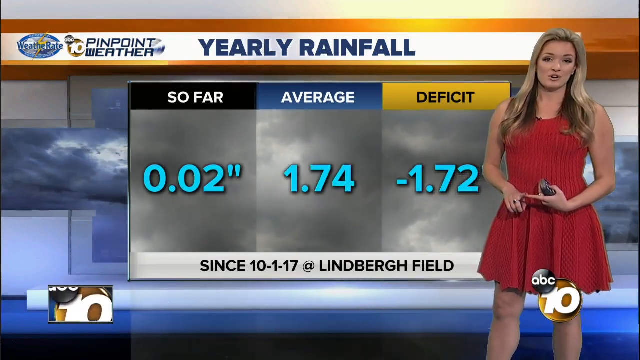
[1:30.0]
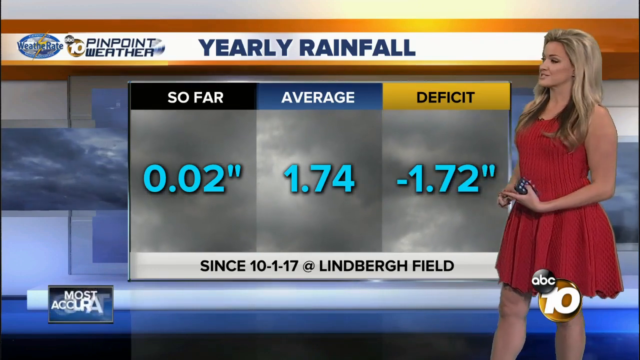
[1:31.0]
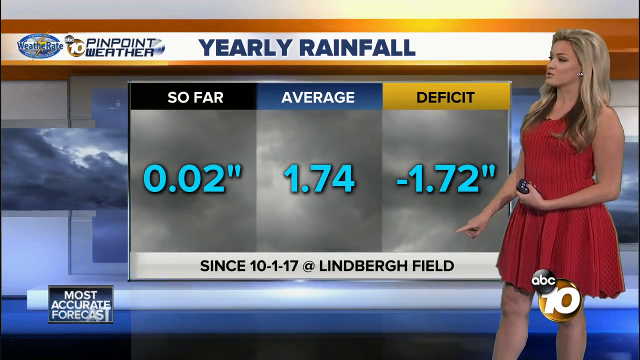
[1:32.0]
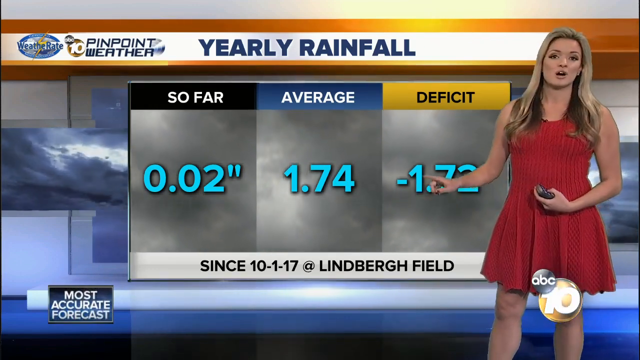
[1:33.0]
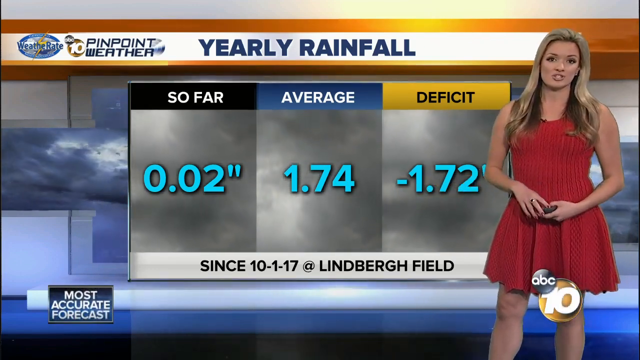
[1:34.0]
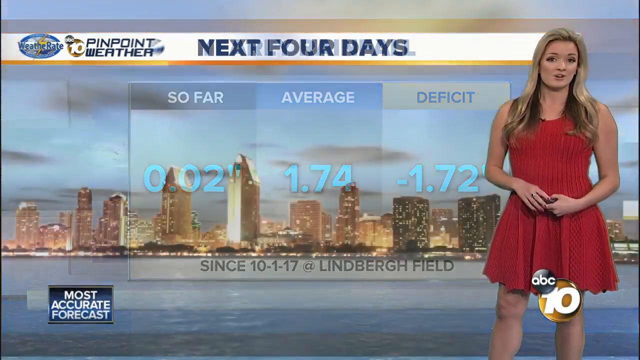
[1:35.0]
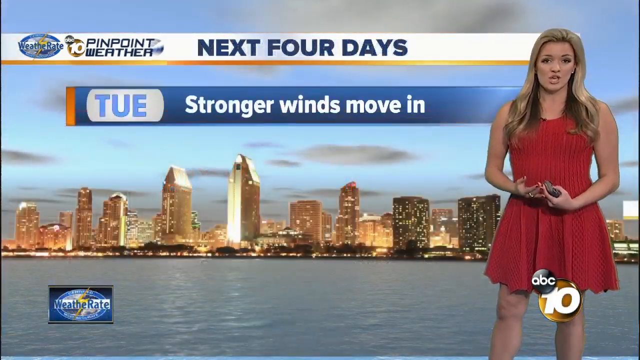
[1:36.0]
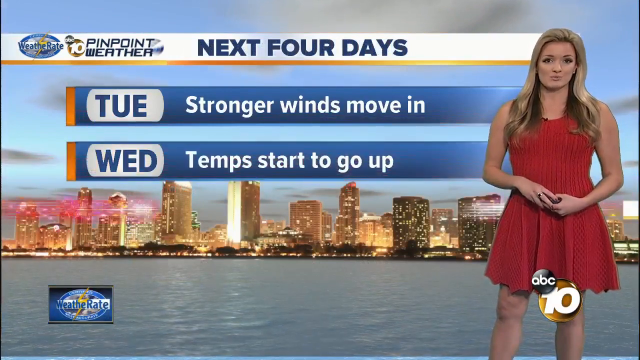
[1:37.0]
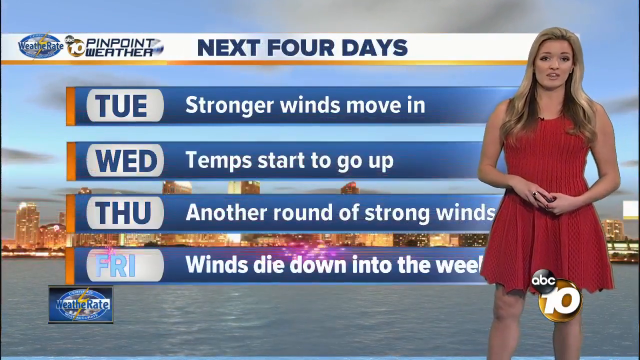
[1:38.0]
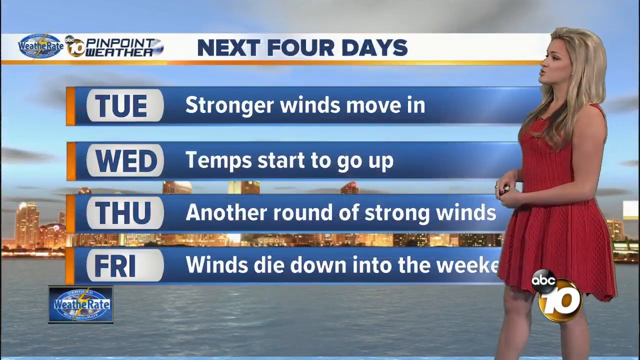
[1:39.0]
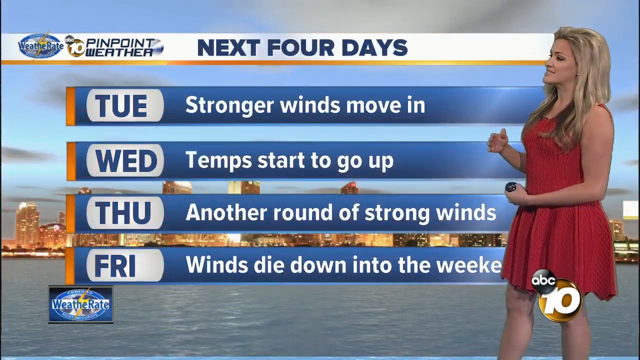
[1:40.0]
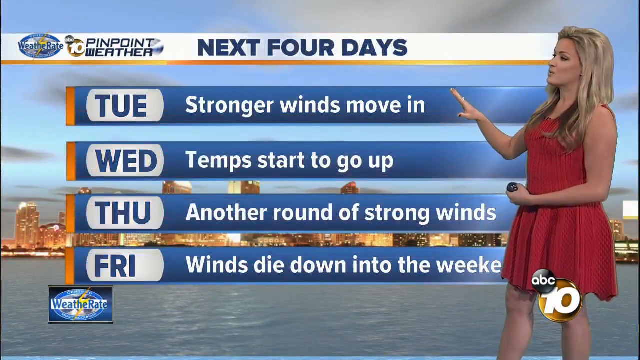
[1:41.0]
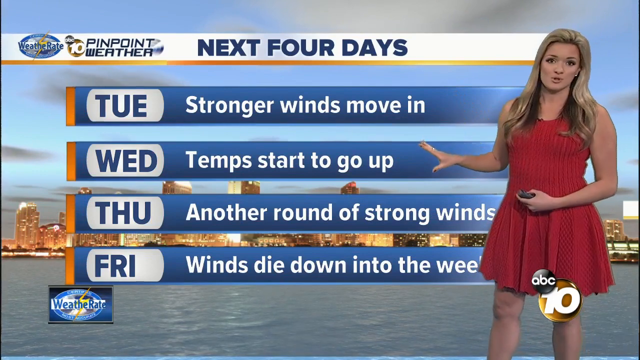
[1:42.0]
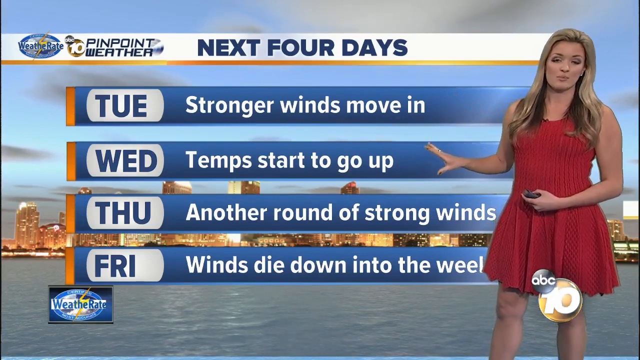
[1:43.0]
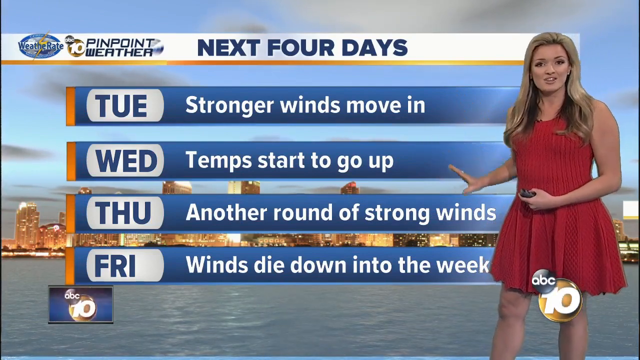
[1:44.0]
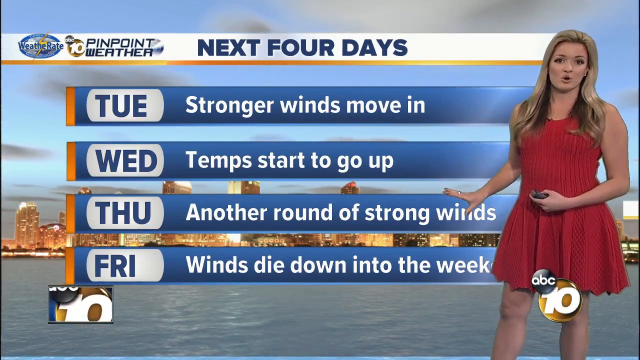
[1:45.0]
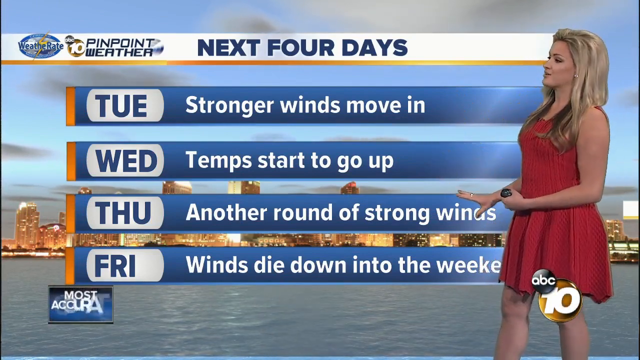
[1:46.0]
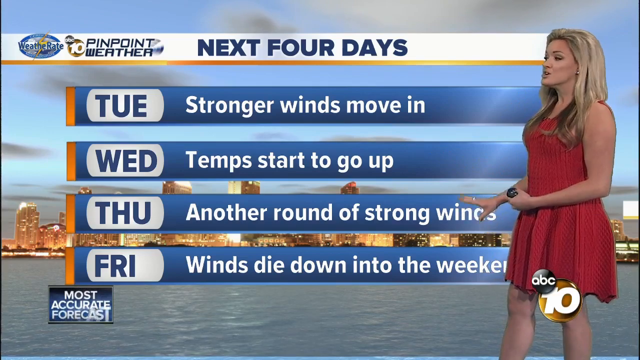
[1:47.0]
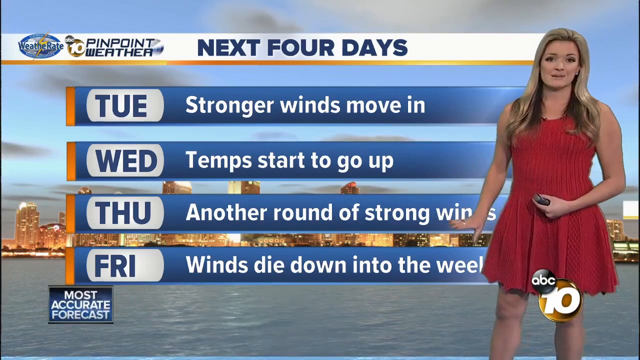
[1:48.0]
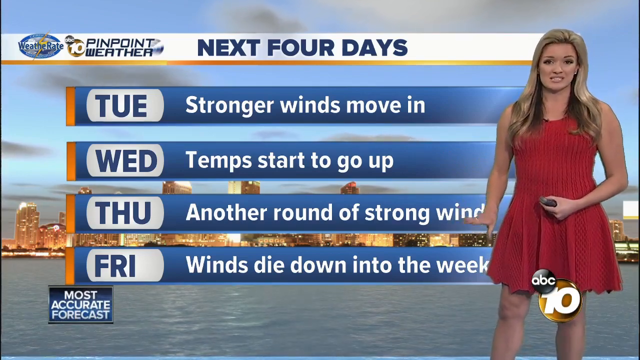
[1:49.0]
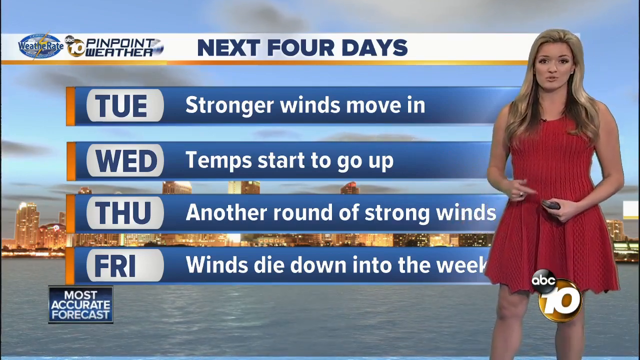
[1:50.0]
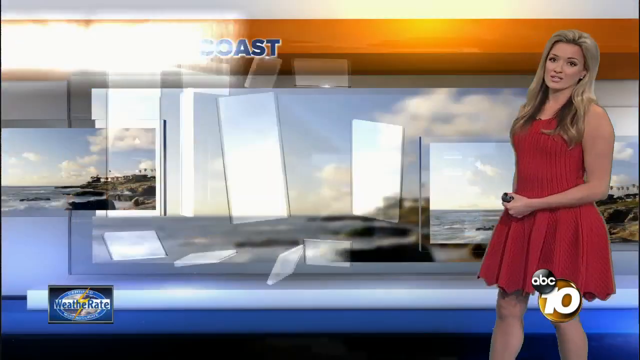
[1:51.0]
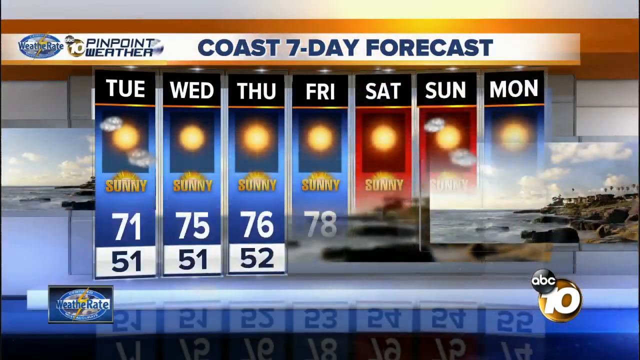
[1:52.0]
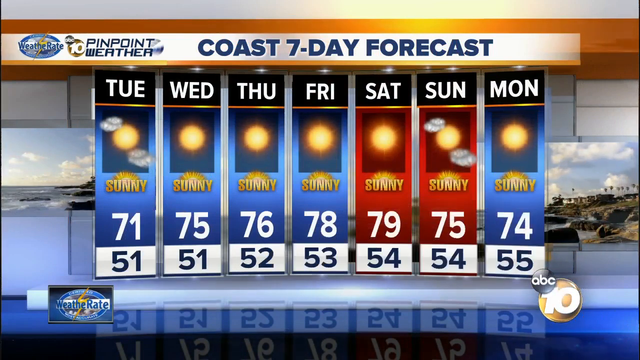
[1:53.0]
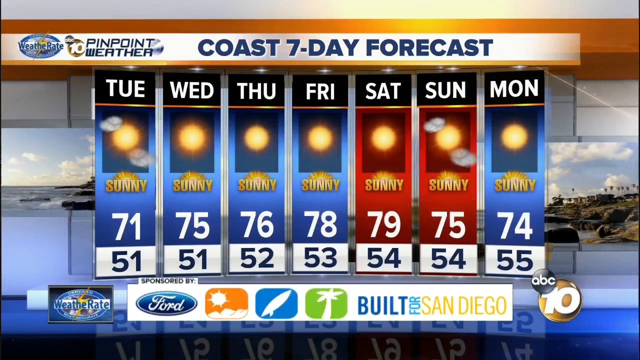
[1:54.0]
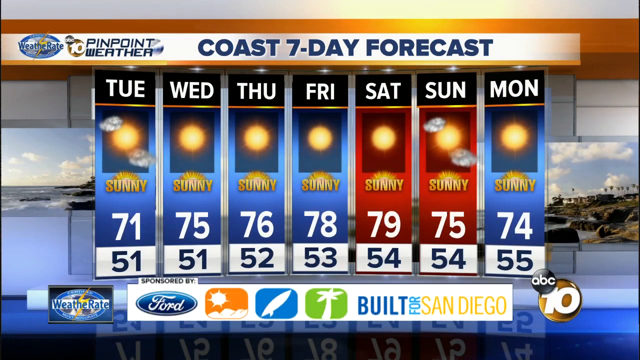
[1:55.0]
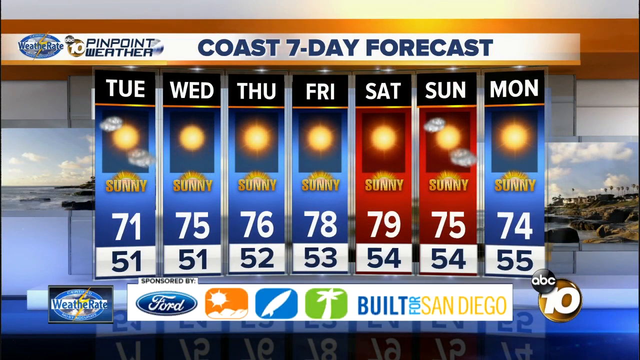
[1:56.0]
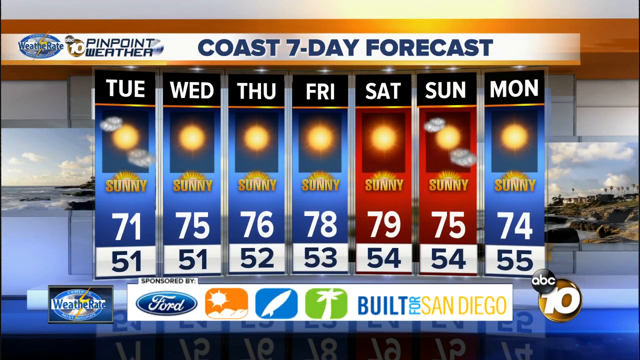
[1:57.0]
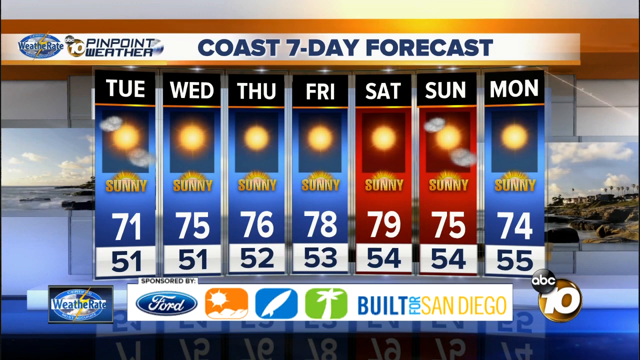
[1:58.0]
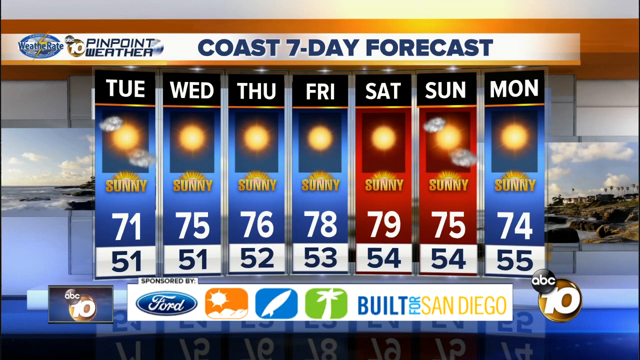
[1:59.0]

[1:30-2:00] She is still explaining the yearly rainfall chart. Next, a "next four days" screen shows Tuesday with "stronger winds move in", Wednesday with temperatures starting to go up, Thursday with another round of strong winds, and Friday with the winds dying down into the weekend; she looks at it while explaining. She then moves to the coast seven-day forecast: Tuesday at 71 with a low of 51, Wednesday at 75 with a low of 51, a highest of 79 and a minimum of 59, with mostly sunny days all week.